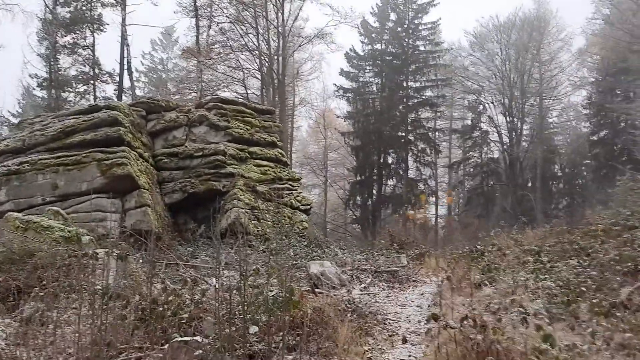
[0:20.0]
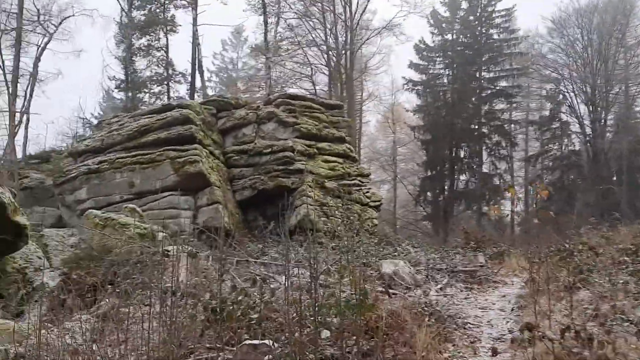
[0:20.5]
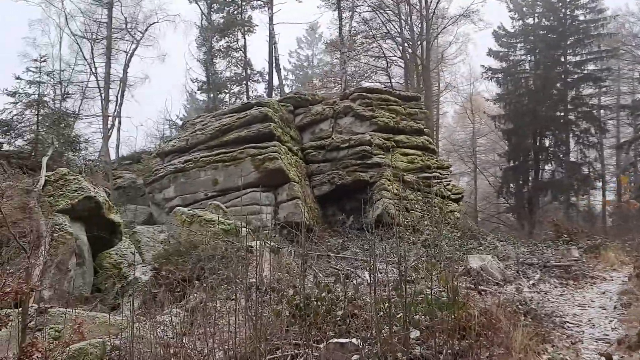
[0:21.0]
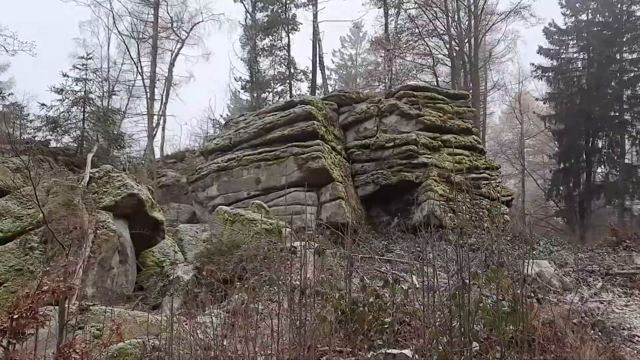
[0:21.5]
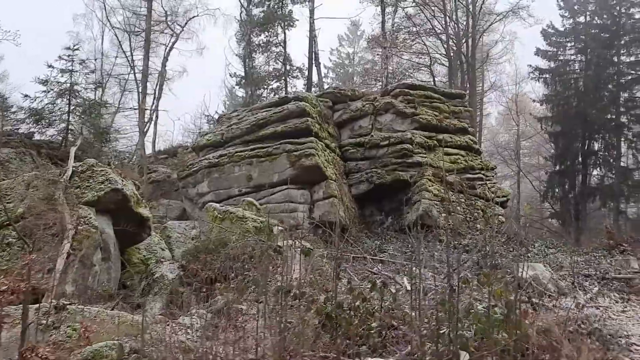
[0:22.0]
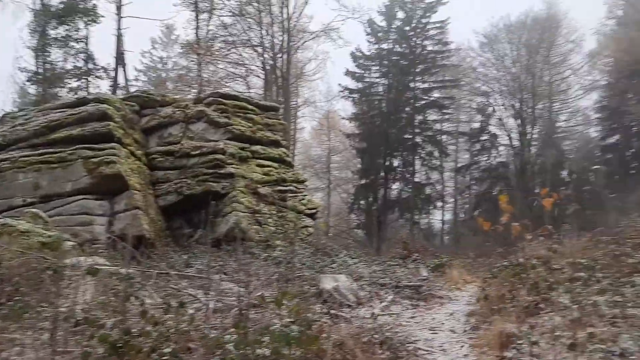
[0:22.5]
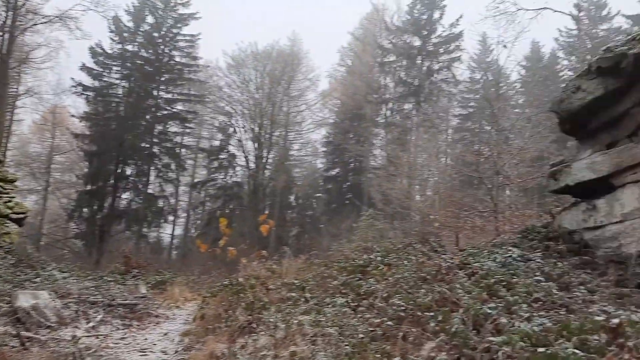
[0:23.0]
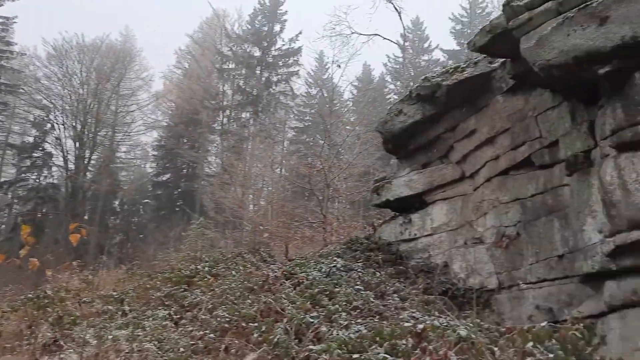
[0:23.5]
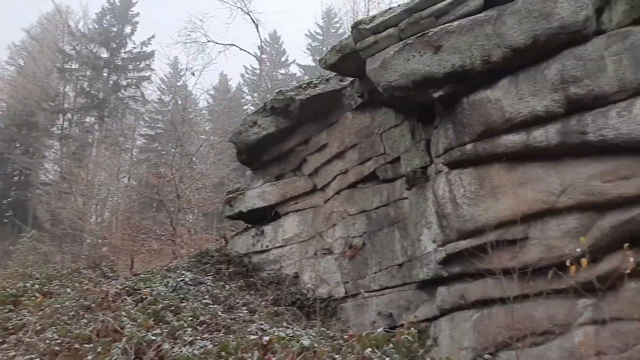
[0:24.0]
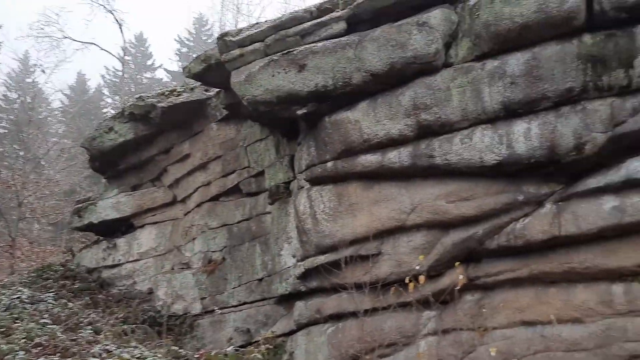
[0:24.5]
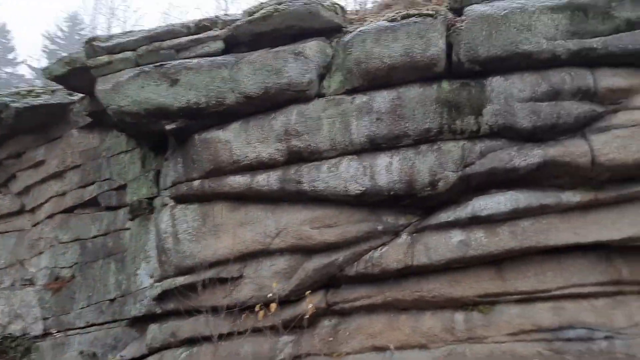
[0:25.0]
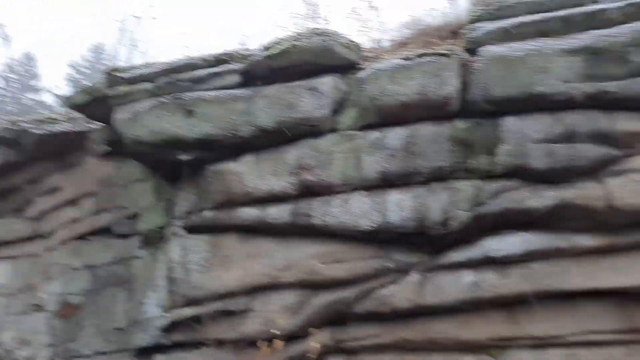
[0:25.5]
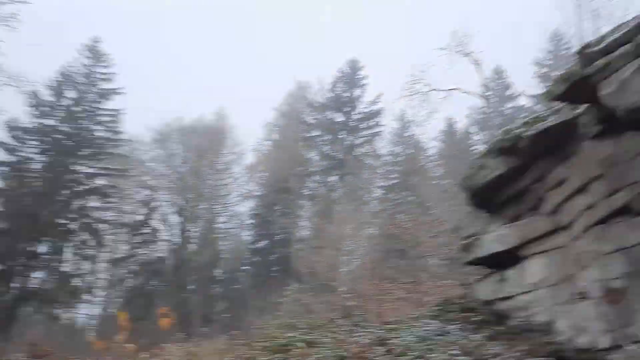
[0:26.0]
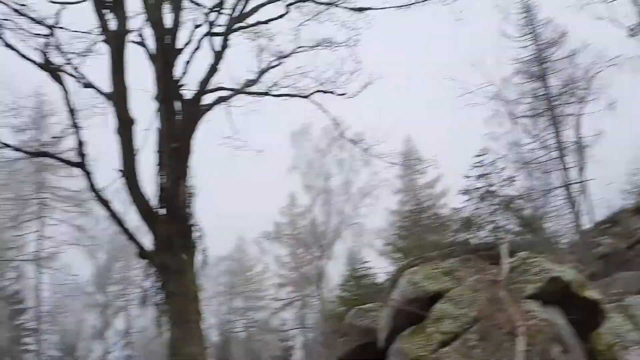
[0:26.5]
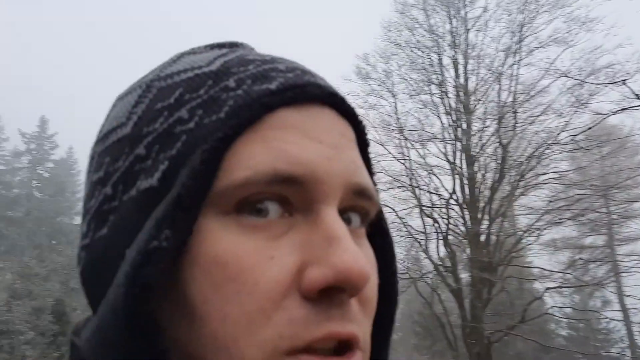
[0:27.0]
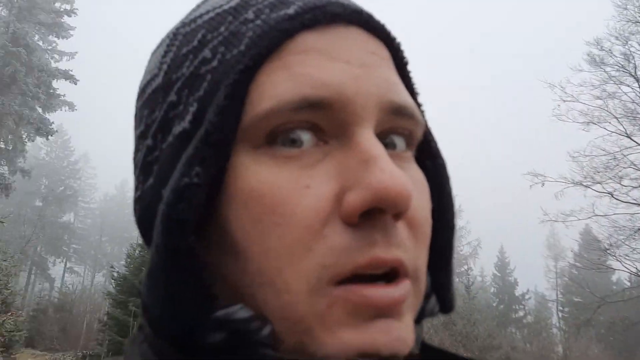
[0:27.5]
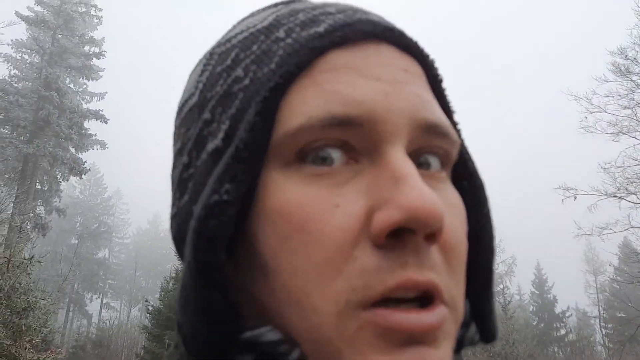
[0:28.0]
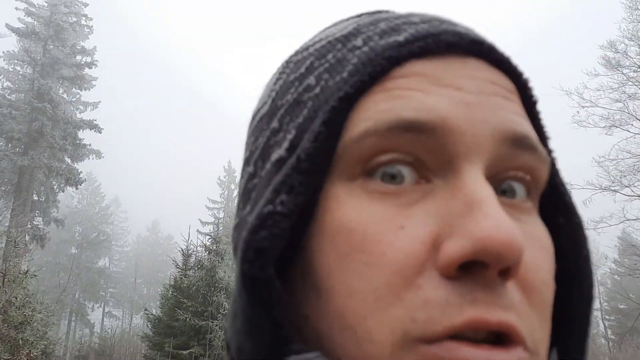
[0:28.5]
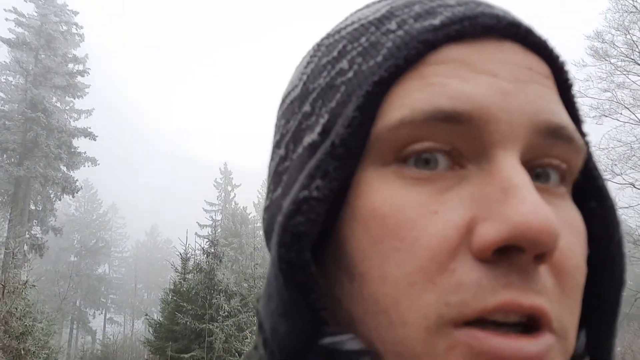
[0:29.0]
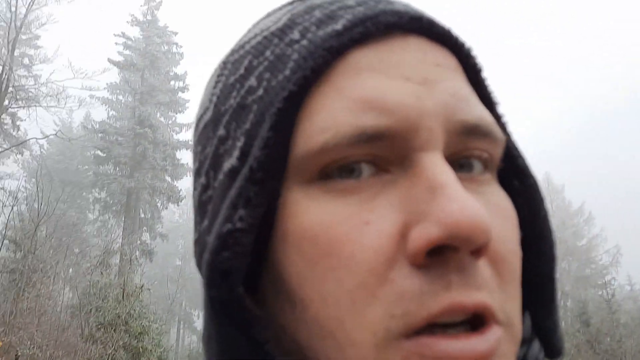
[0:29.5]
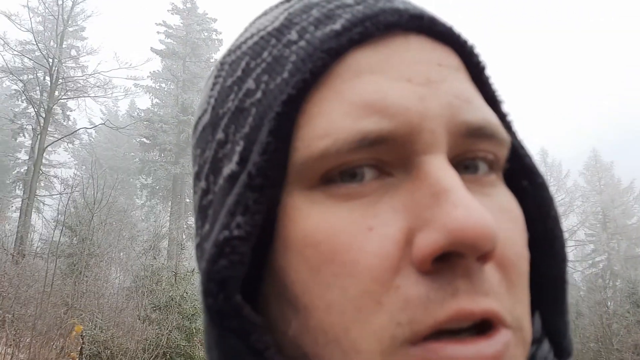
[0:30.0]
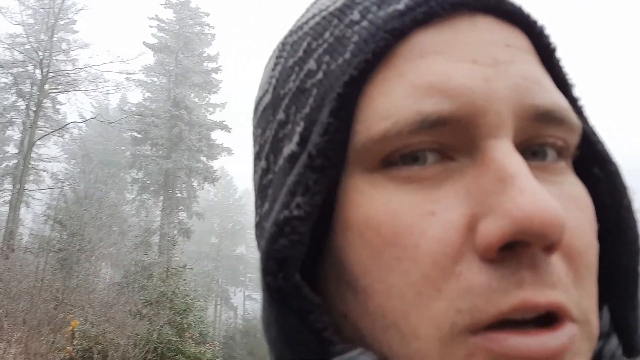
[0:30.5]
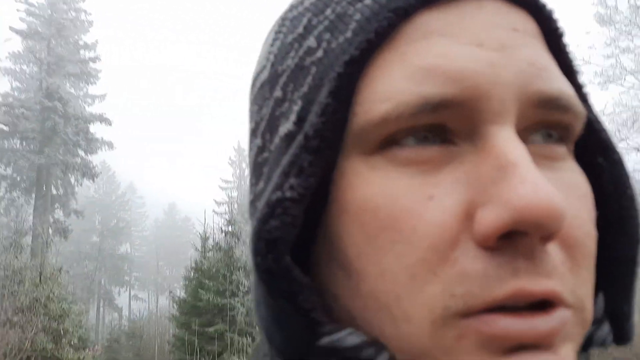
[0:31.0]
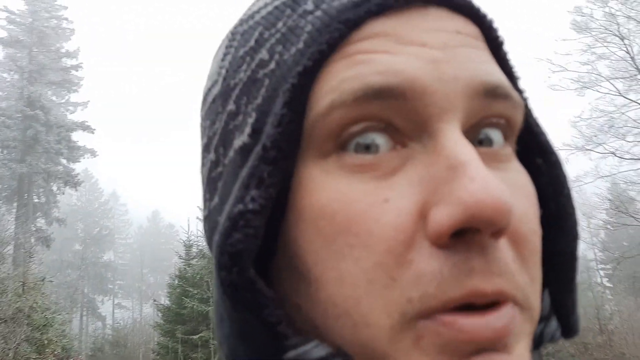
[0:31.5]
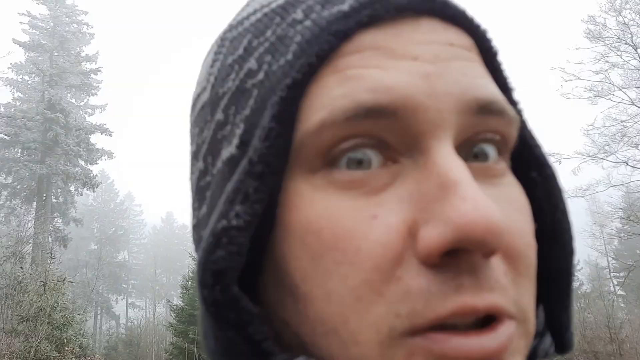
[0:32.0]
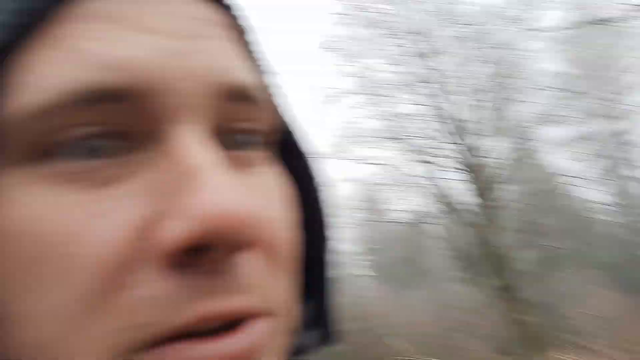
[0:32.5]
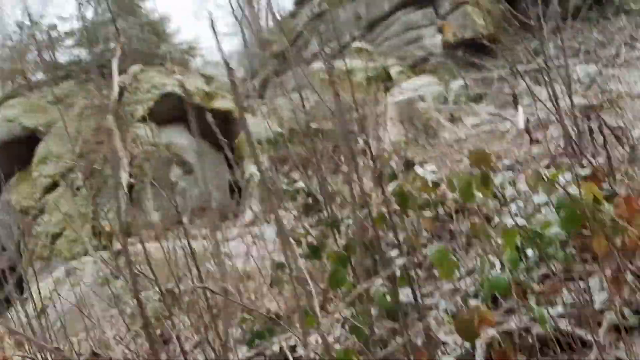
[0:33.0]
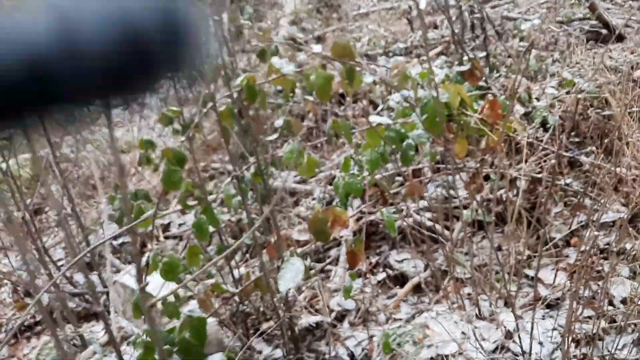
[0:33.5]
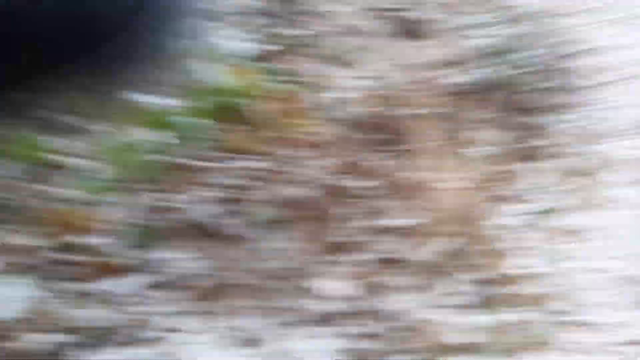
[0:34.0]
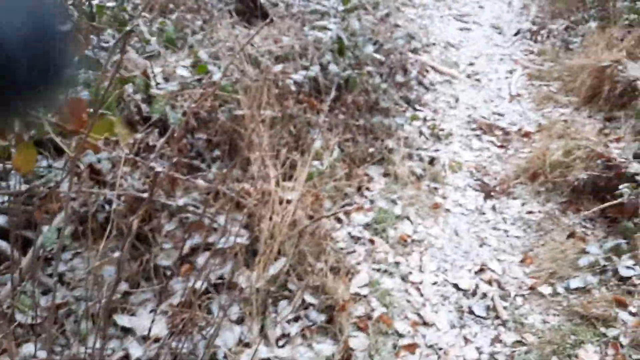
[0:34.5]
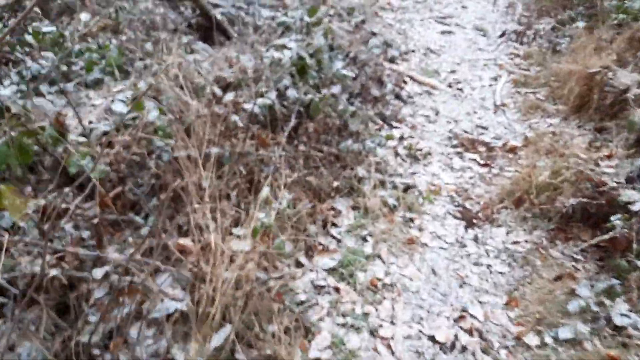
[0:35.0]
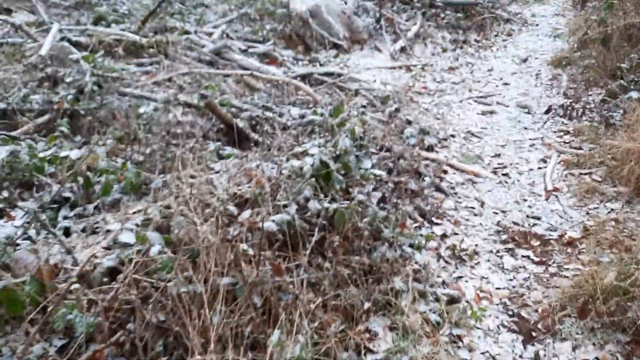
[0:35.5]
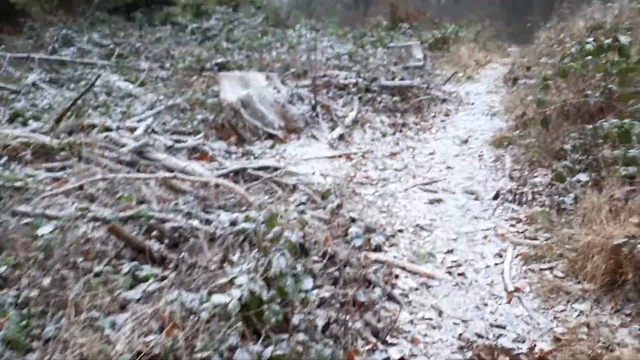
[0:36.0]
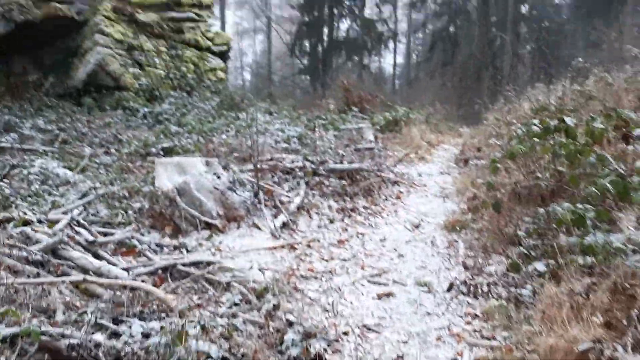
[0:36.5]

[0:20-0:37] In a forested area, a person films rock formations, then turns the camera toward himself. The man wears a black knitted winter cap. He seems to be talking, and his eyes get kind of big as he appears to explain what he is looking at. It looks kind of wintry, with almost a whiteness on a path down below that may be a little snow or frost. The rock formations look kind of brown, with a slight greenish tint at their edges. Various pine trees jut out in the forest, and the rest of the trees look like winter trees that have lost their leaves.